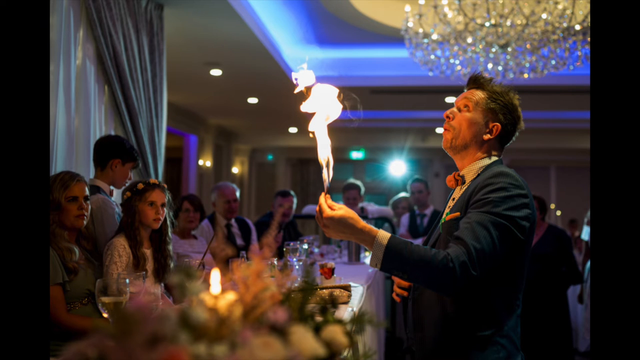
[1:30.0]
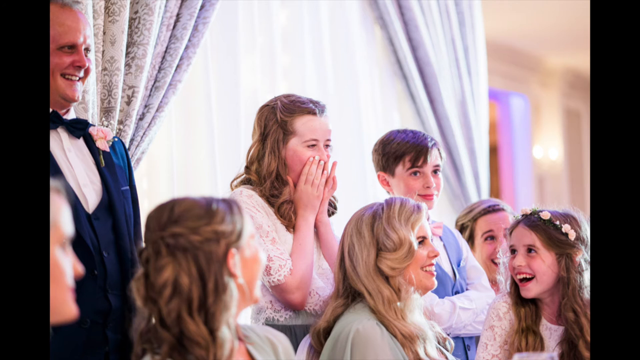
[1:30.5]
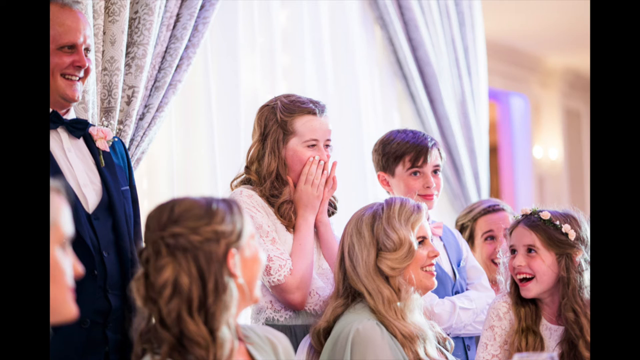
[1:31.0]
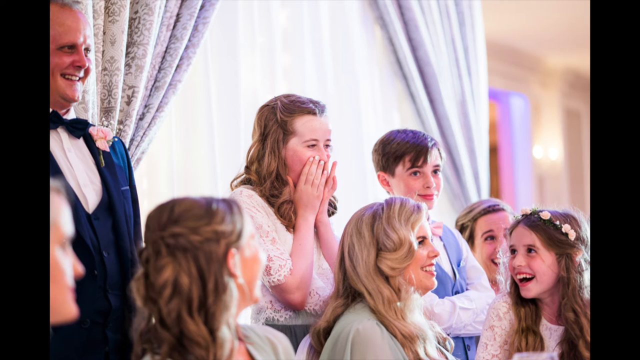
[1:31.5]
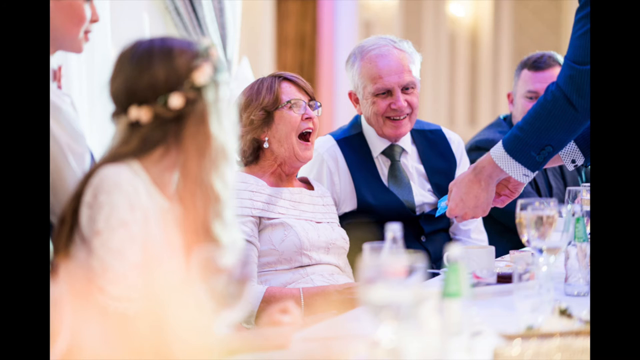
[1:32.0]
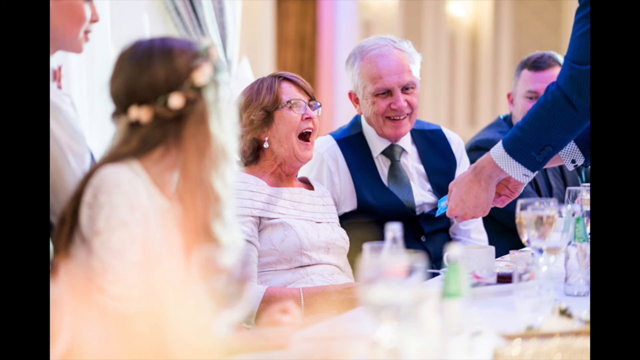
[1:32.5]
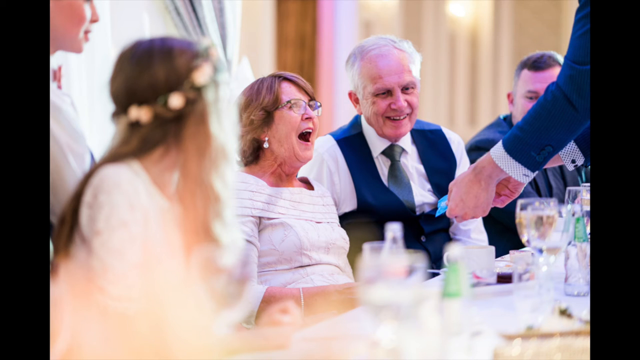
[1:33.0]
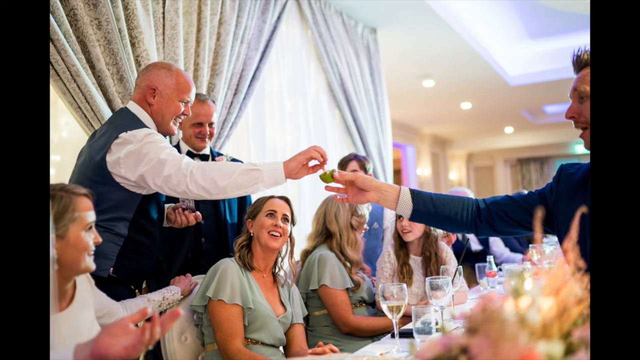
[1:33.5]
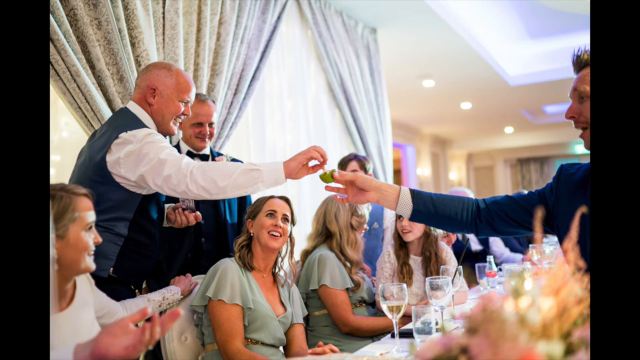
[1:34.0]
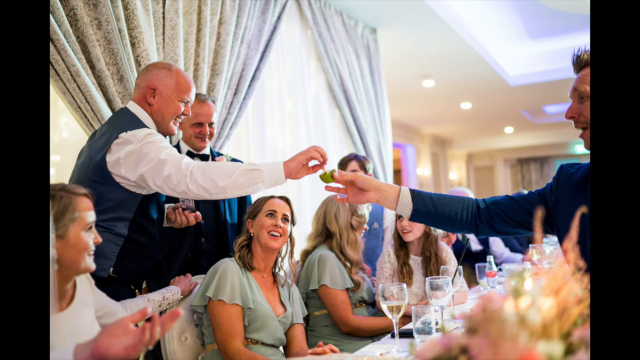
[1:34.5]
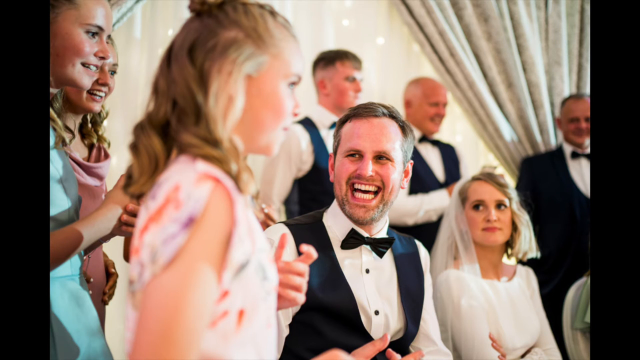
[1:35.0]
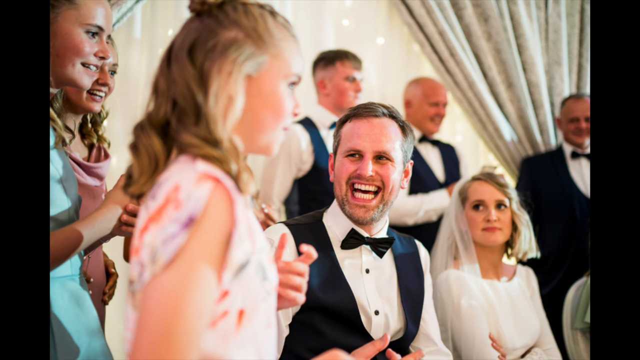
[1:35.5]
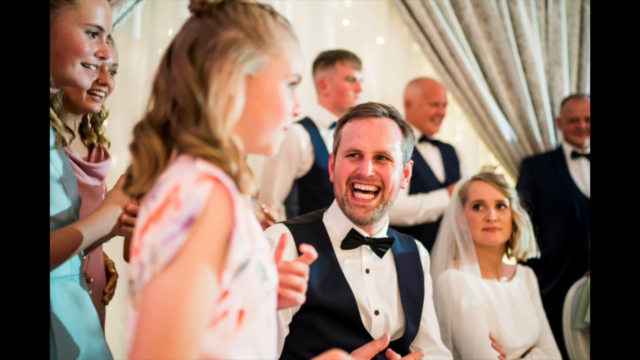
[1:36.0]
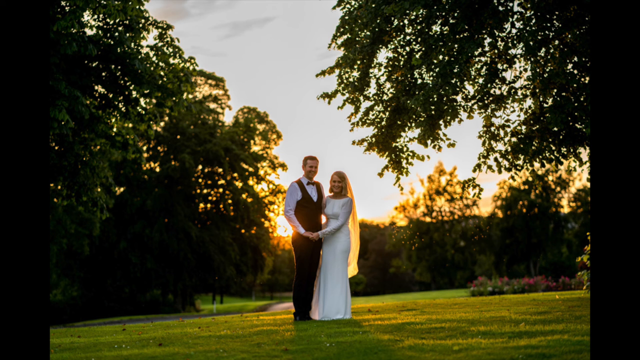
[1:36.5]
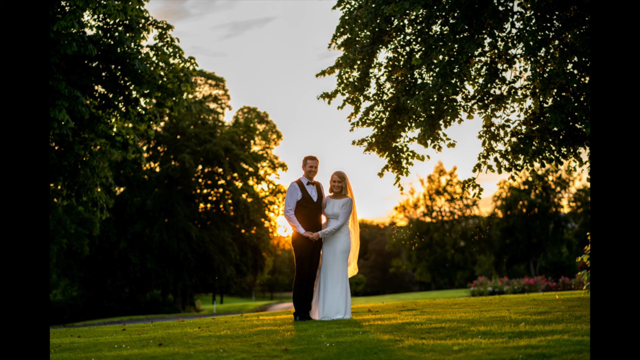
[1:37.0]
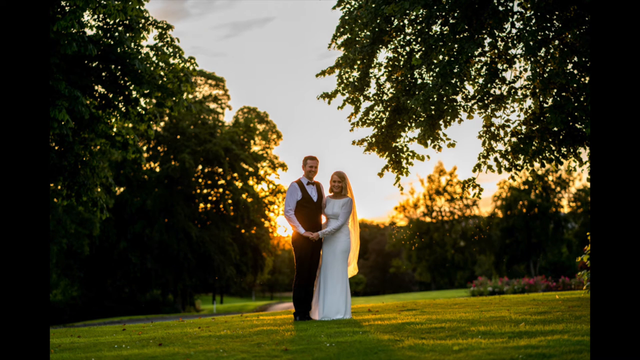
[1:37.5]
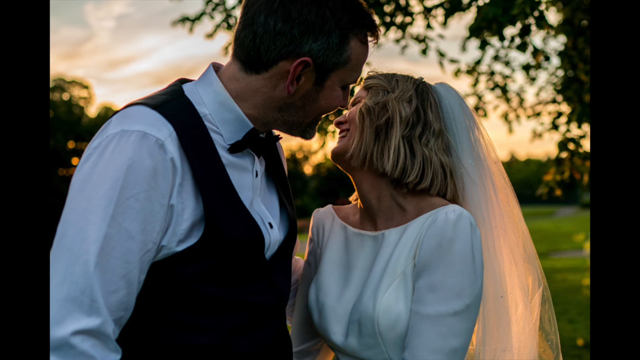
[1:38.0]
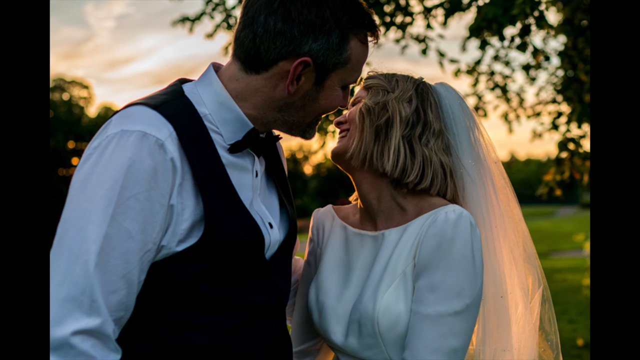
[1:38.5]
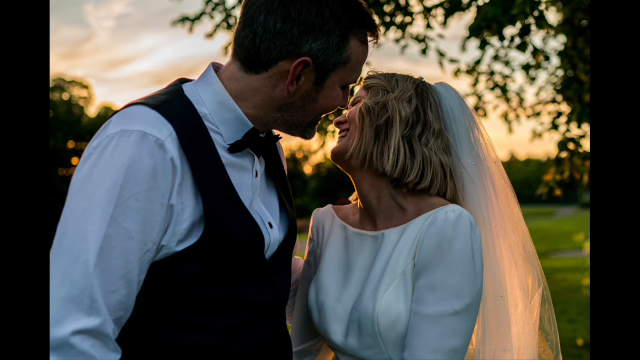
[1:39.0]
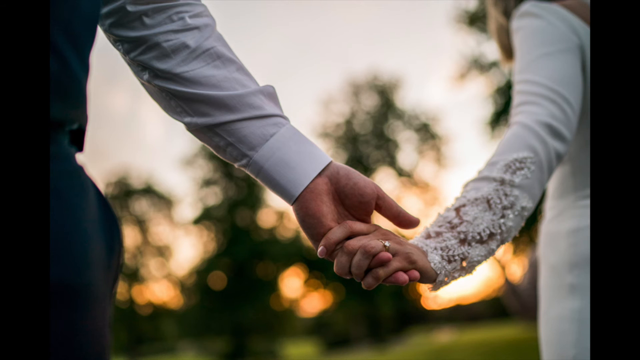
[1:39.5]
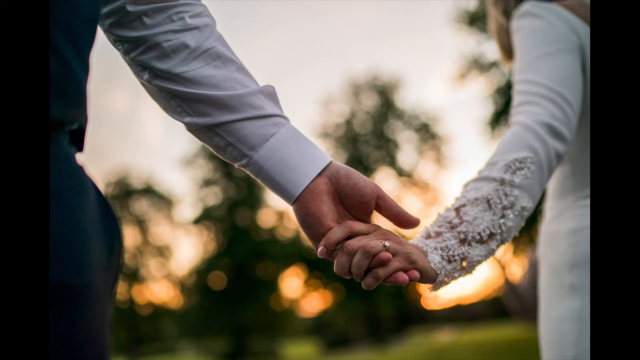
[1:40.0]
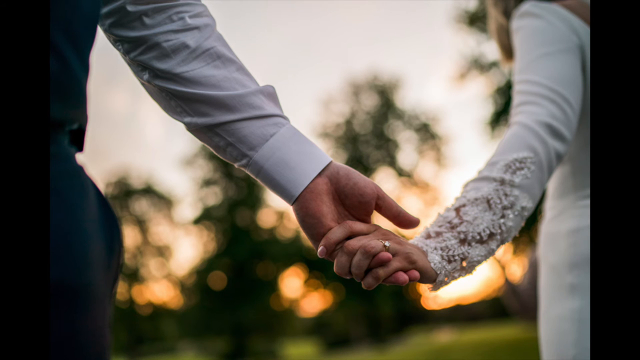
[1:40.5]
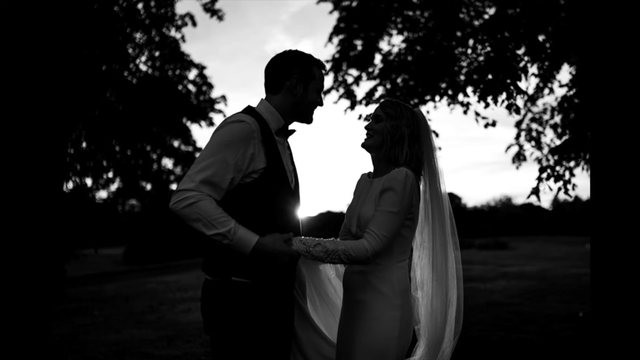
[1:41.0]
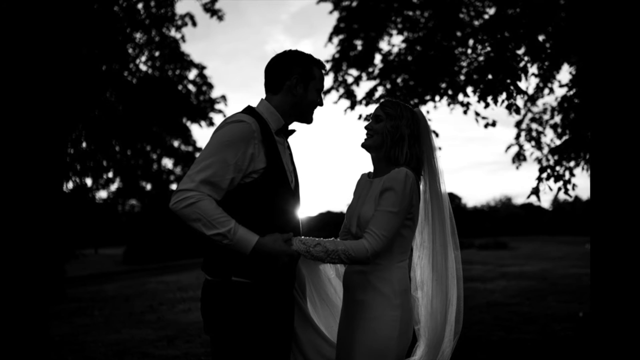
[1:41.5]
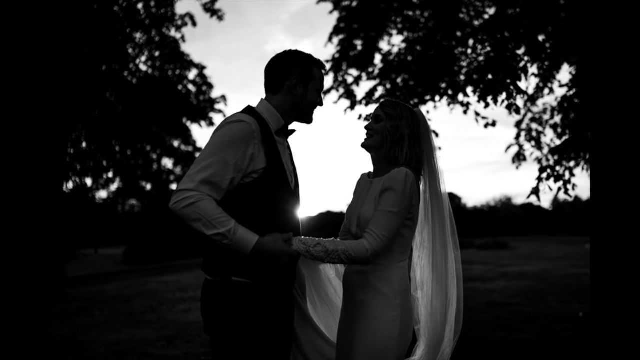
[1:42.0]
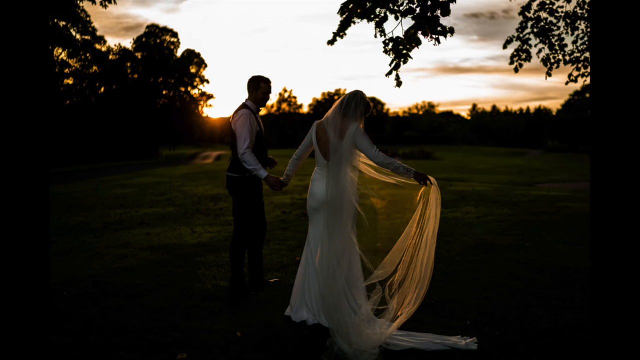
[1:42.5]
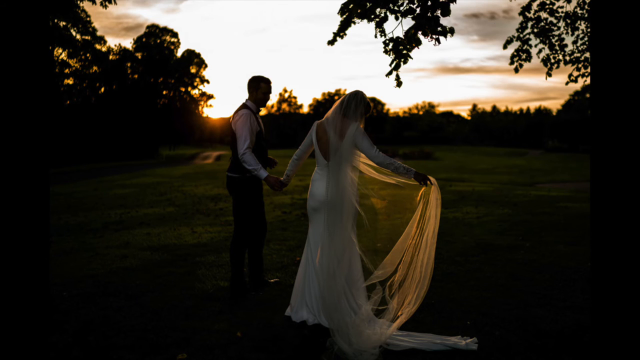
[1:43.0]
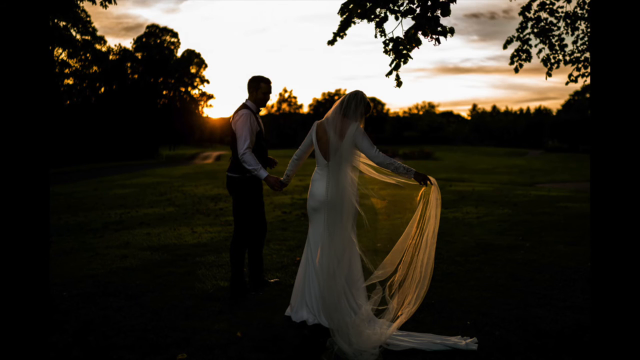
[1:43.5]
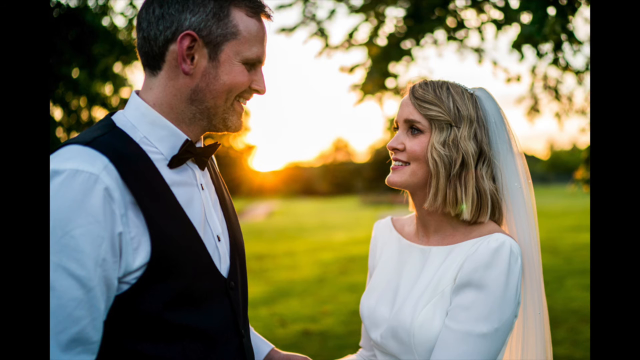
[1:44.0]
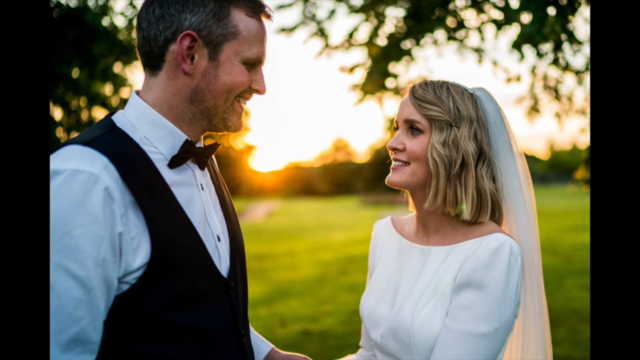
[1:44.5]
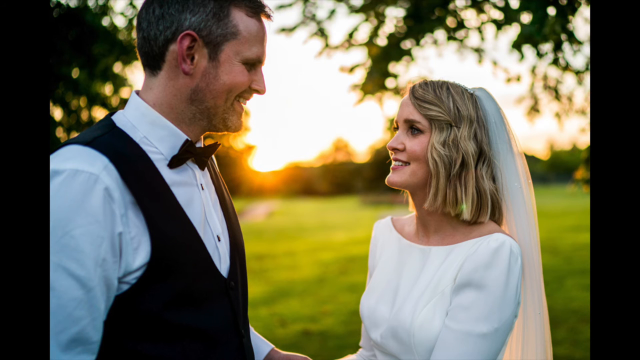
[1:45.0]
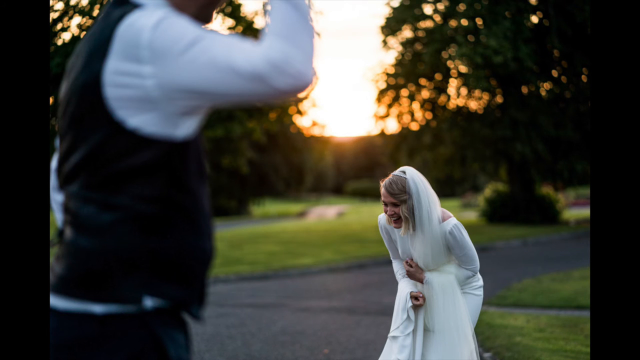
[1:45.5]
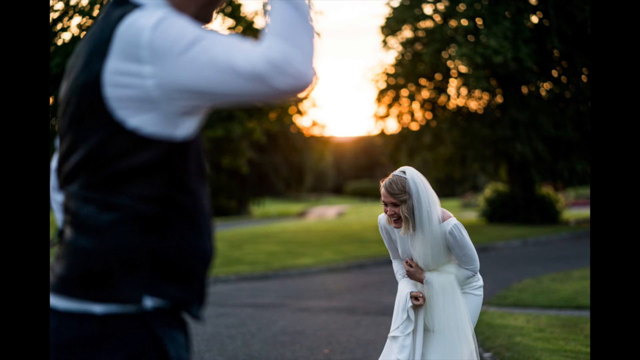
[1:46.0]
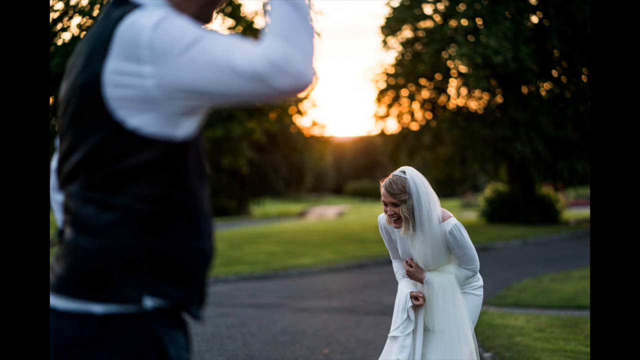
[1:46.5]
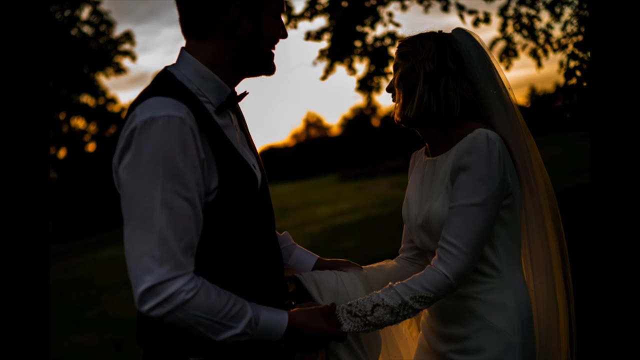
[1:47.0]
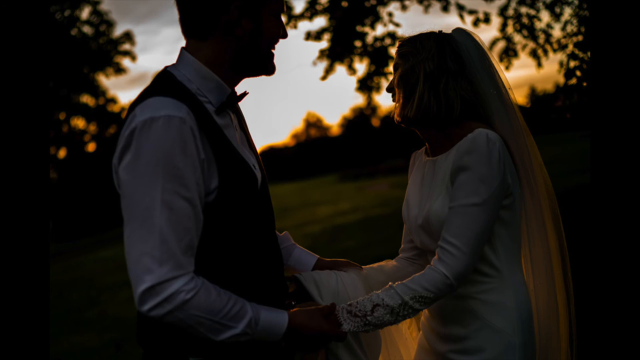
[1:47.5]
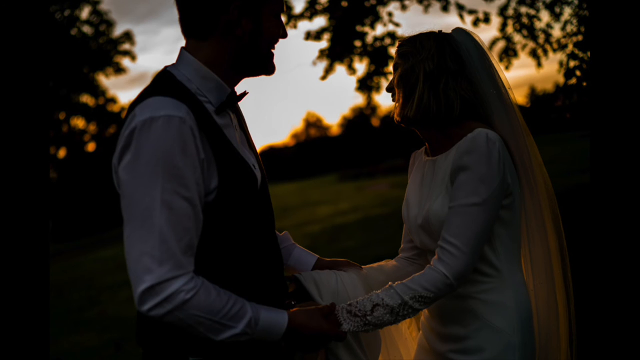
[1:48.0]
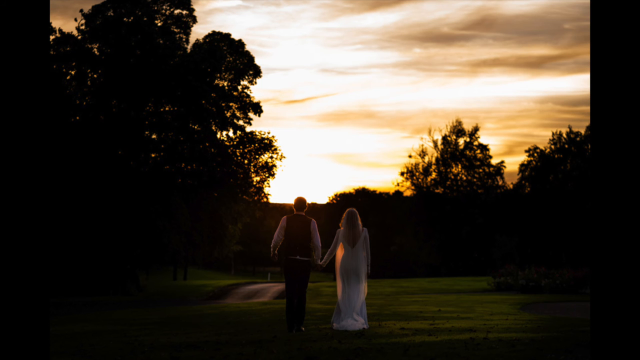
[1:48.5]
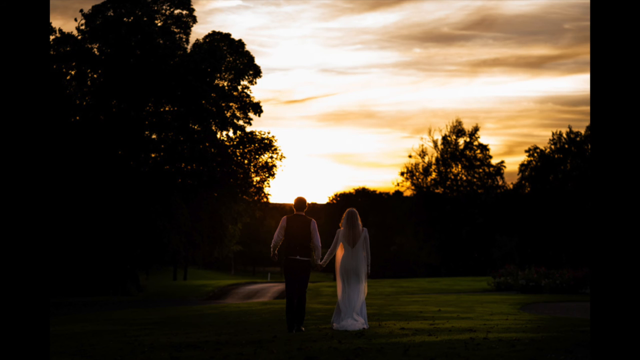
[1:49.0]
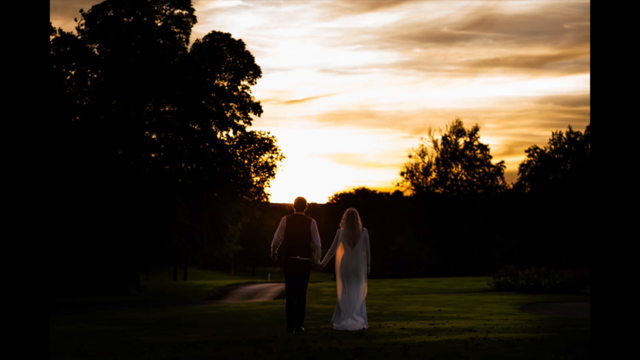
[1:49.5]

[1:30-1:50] More candid shots show people looking on, laughing and smiling; the pictures are very bright. The groom's mom has her mouth open in shock as the magician holds something out in his hands, and somebody takes something from within a green ball. In another sunset shot, the couple have their arms around each other with one of their hands clasped in front, the sun behind them creating a warm golden glow. They hold hands about to kiss, and in other shots their backs are to the camera as she holds her veil out. Pictures show them laughing, walking, and dancing inside the reception. The outdoor photos are simple and understated, with no props or outrageous poses.